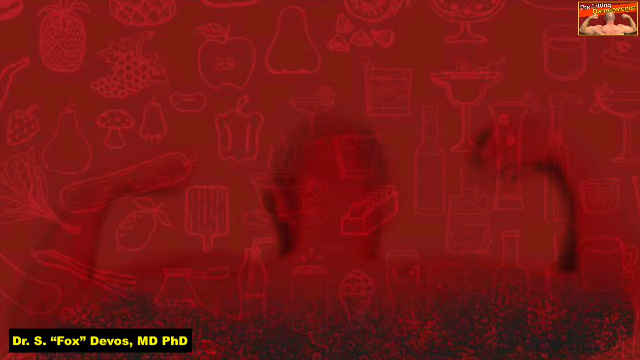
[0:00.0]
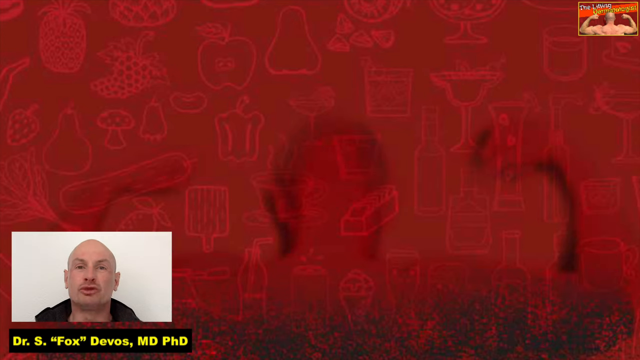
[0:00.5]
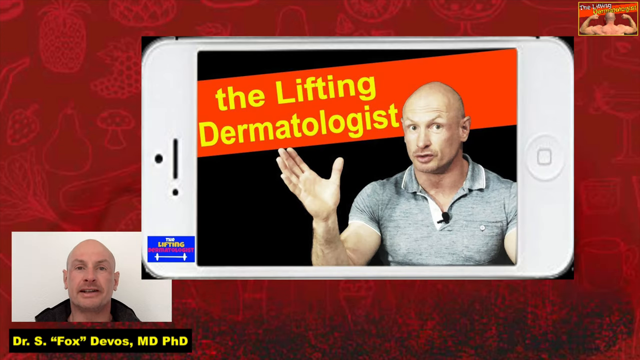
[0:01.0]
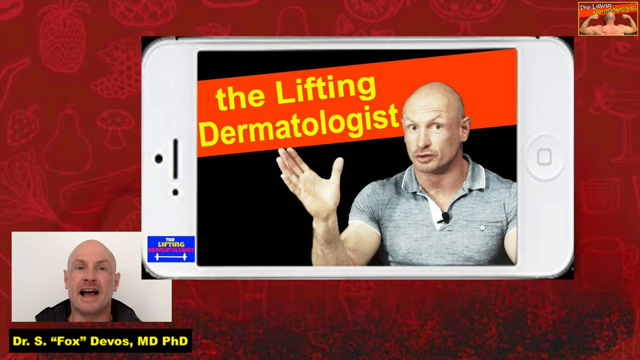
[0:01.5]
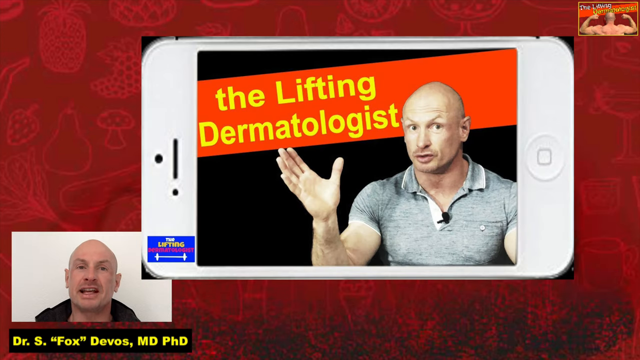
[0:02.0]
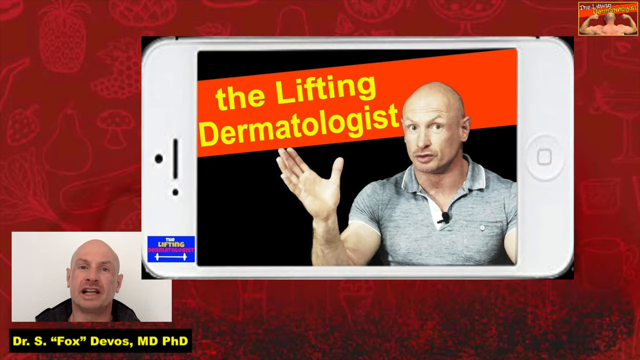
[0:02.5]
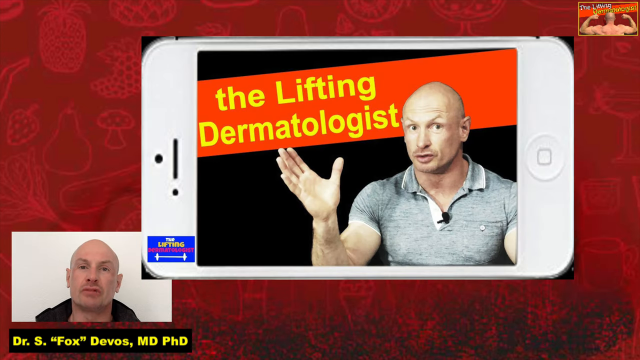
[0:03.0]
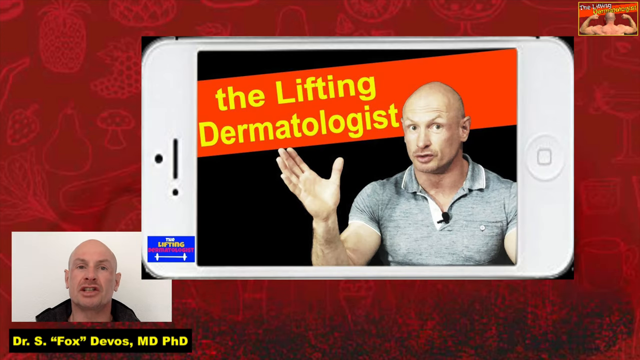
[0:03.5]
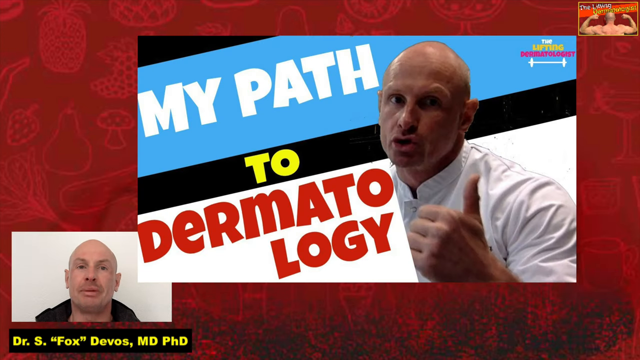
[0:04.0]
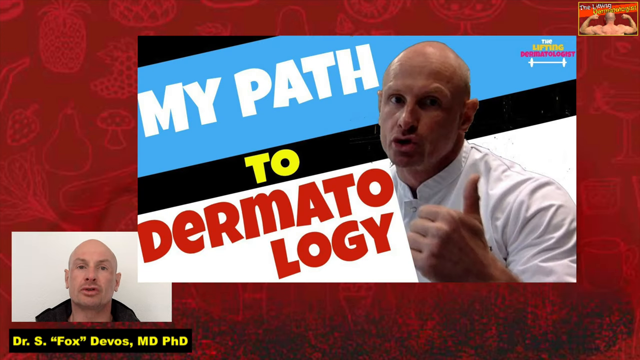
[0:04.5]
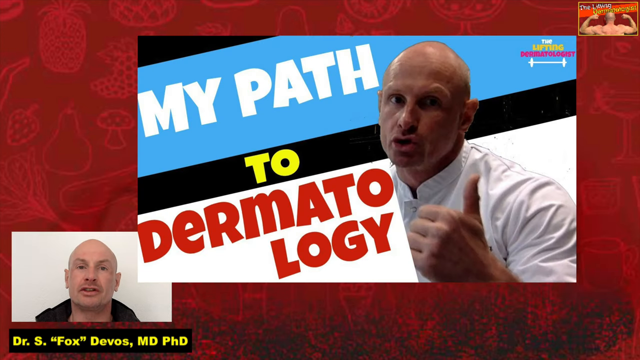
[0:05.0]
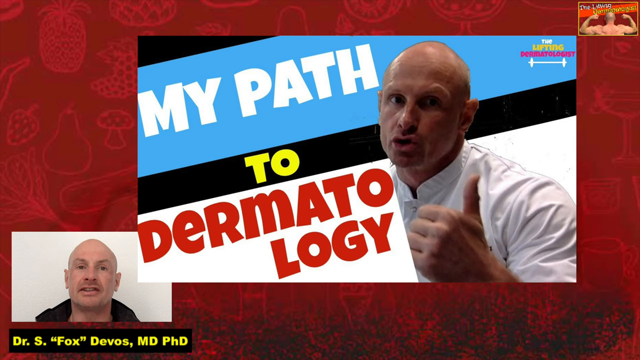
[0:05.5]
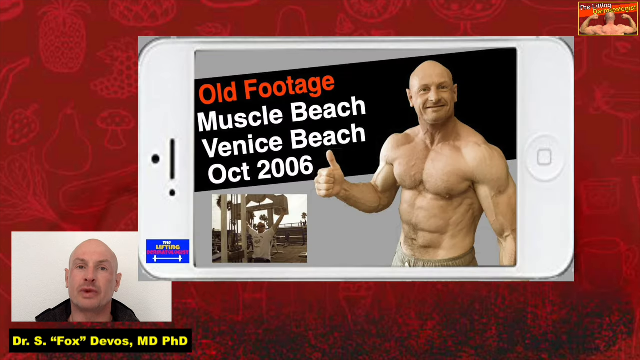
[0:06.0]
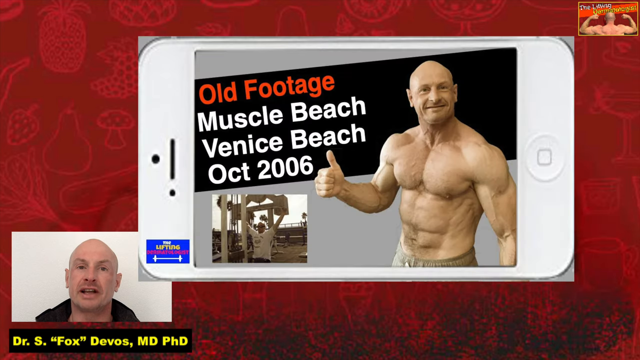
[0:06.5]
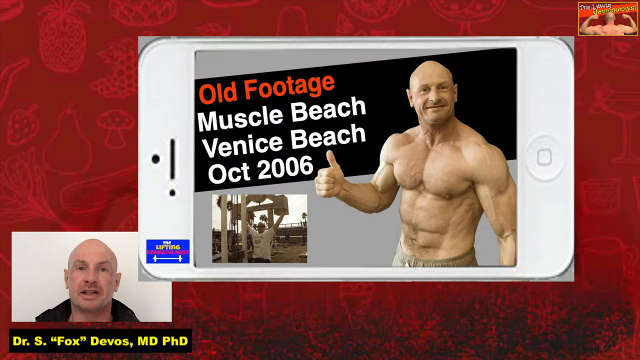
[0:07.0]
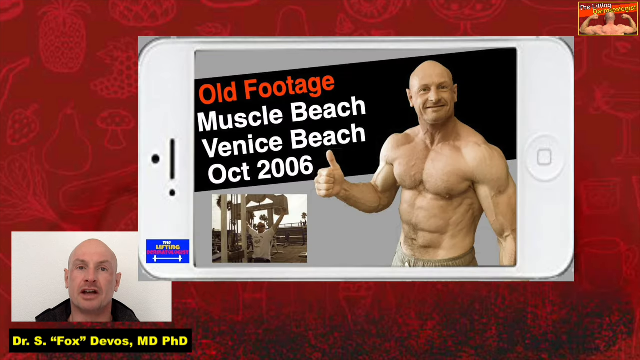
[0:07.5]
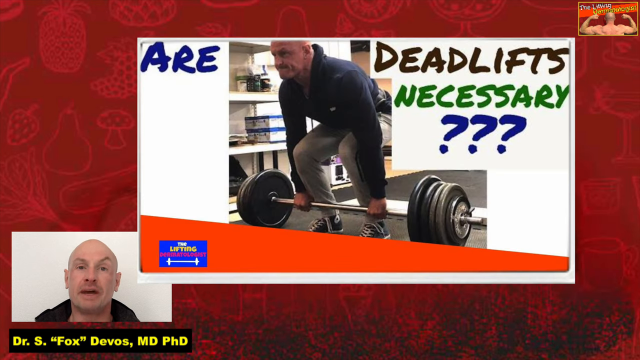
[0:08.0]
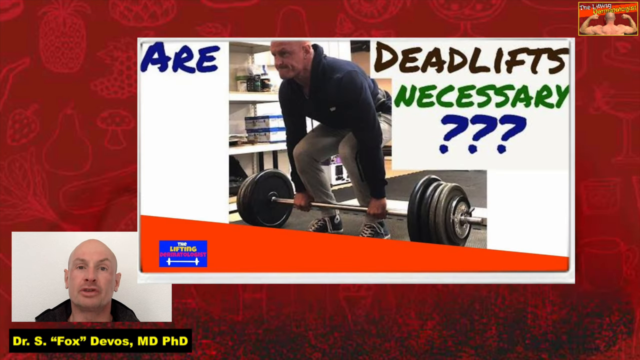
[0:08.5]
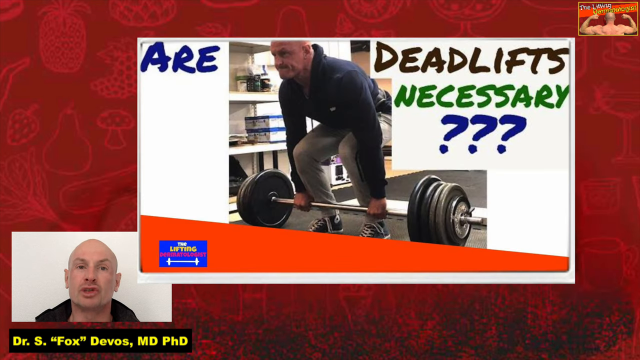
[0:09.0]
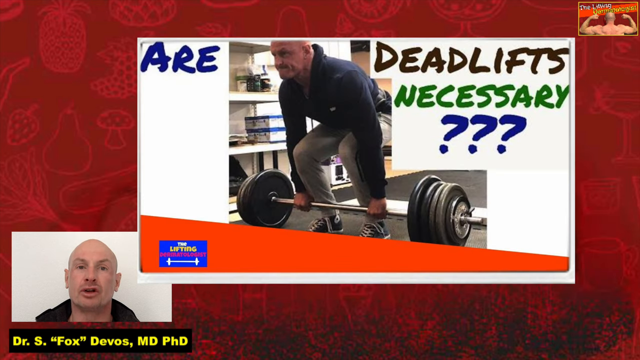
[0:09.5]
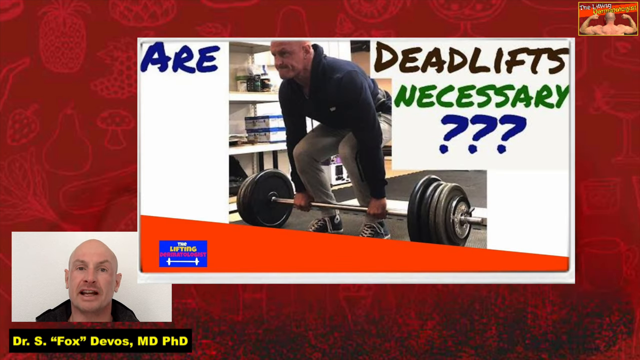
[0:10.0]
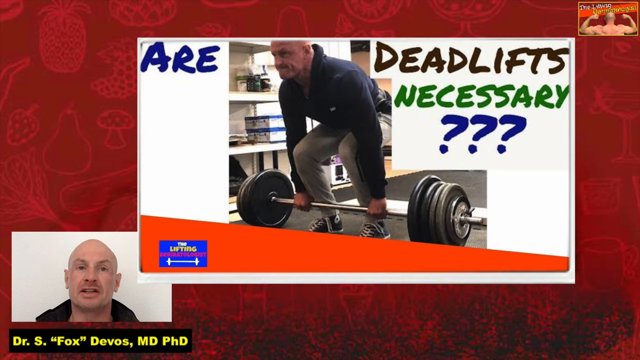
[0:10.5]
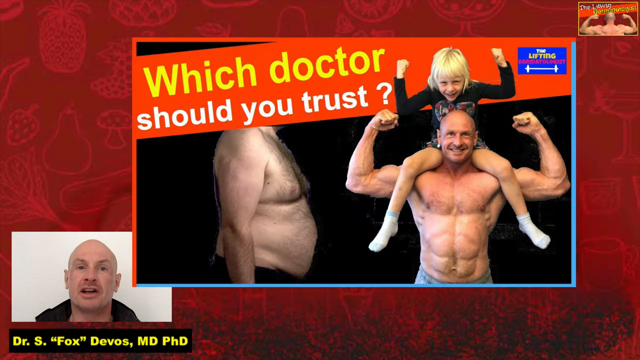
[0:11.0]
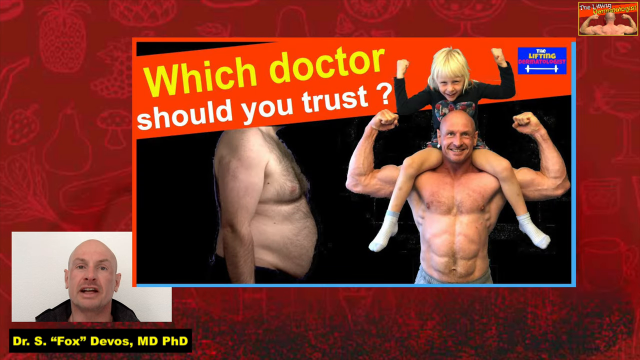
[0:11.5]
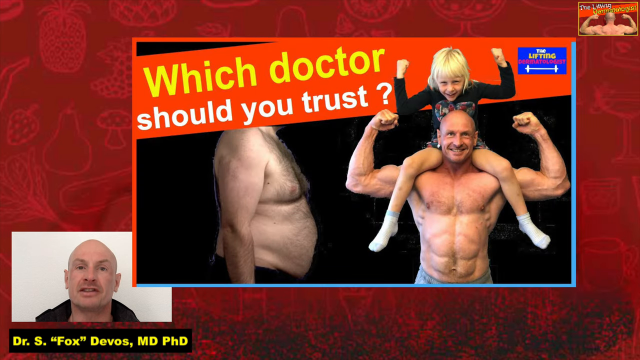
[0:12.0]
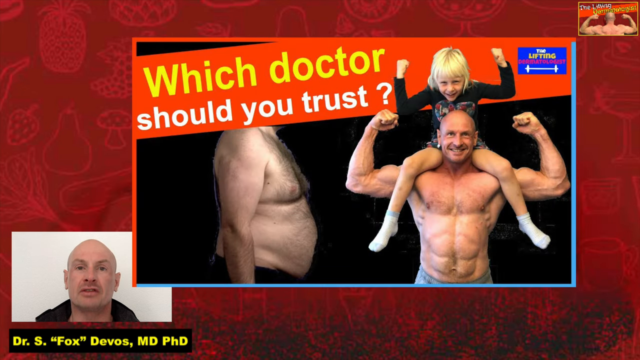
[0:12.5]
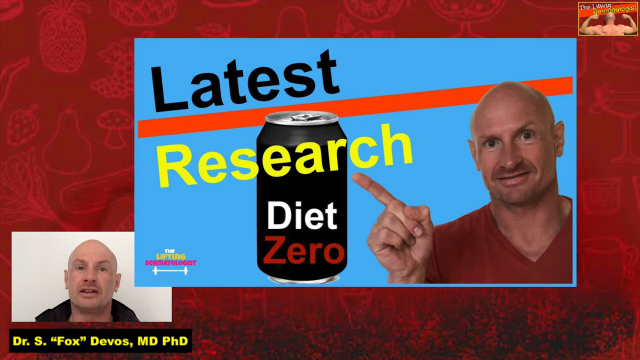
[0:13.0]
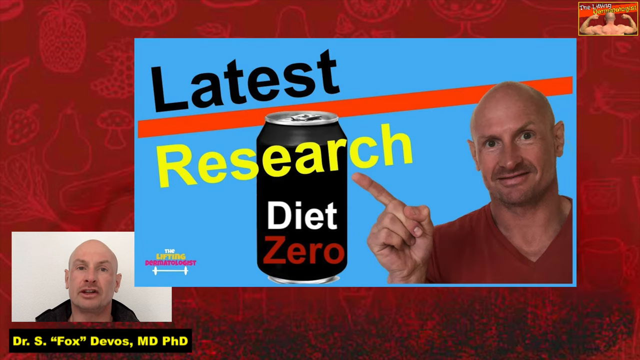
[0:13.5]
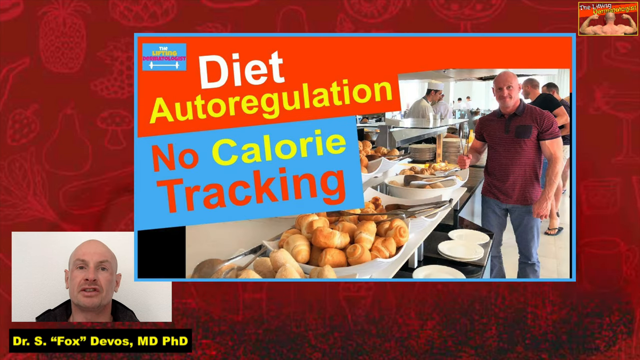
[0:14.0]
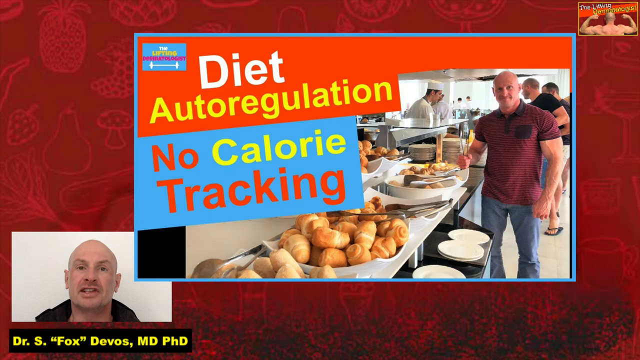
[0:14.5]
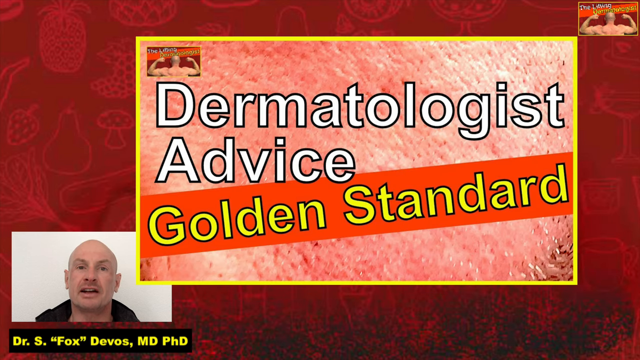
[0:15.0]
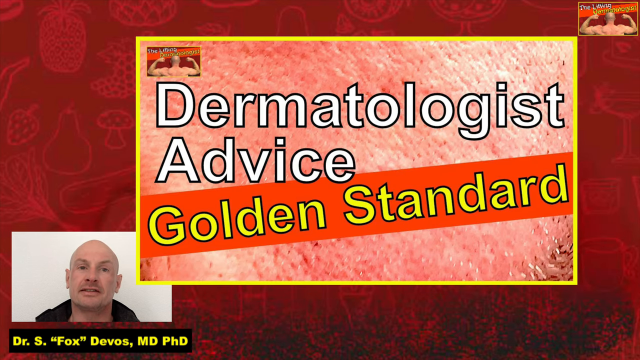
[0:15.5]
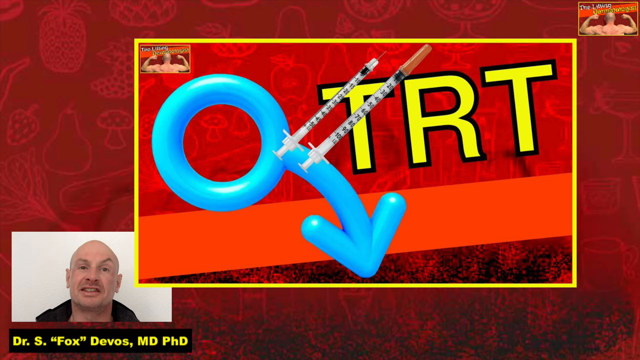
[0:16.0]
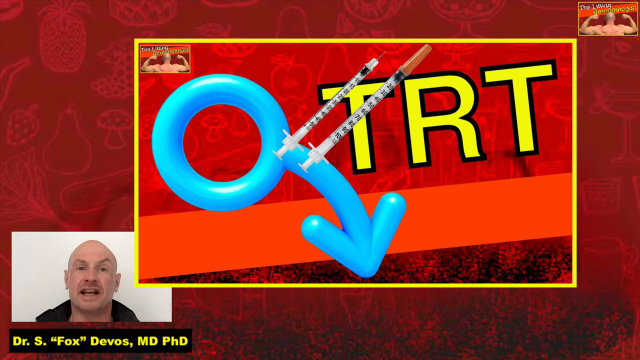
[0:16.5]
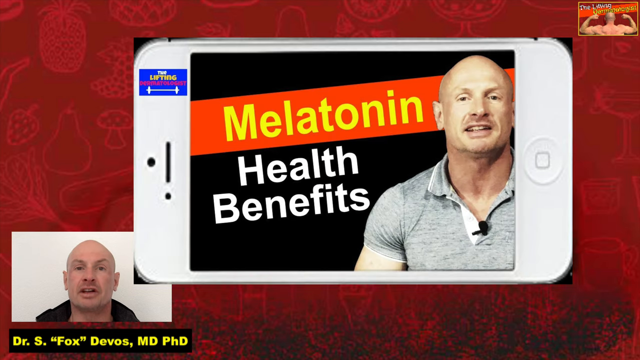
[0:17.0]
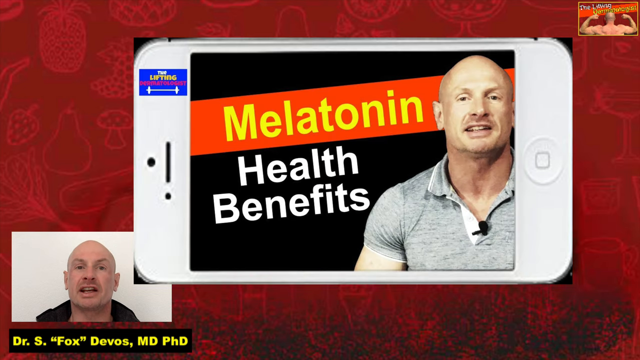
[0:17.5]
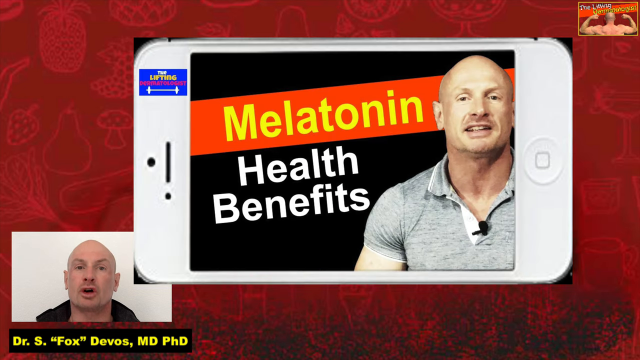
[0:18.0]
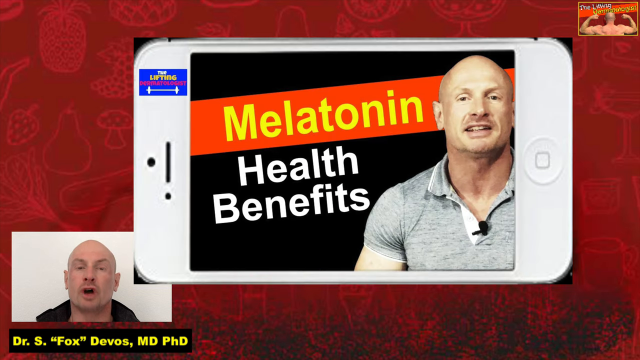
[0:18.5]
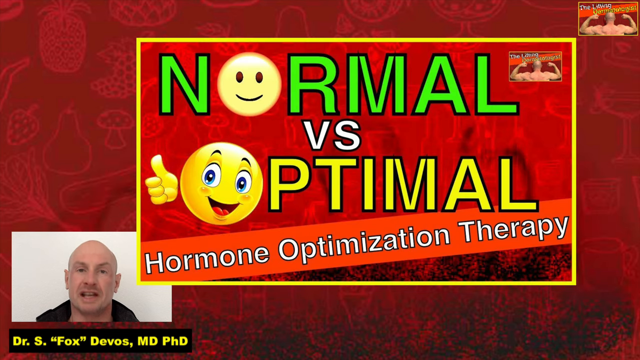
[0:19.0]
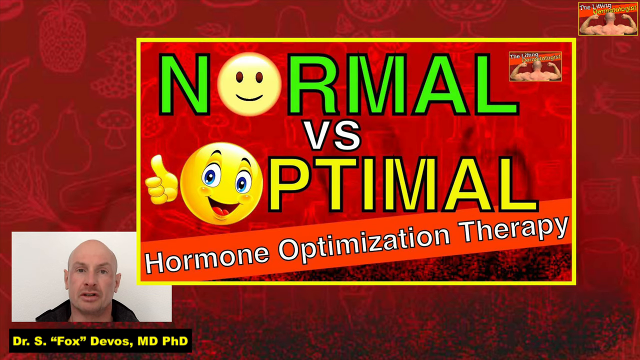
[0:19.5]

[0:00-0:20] The screen is filled with red, and on this background there are many shapes that look like fruits and vegetables drawn with a sort of pink outline. There is also what looks like the shadow of a man with the back of his head to the viewer, his two hands lifted up as he makes what looks like a kind of muscle-flexing gesture; his wrists curve over and his hands are held up, possibly bent at the elbows. A man appears in a box on the left-hand side of the screen. In the centre of the screen is a mobile phone turned on its side so it is horizontal, and what looks like the same man appears on it, wearing a grey polo neck T-shirt. His head is turned slightly to the right so his right ear cannot be seen. His right hand is bent at the elbow and held up, with his fingers and thumb straight, the four fingers held together and the thumb apart. The text on the phone image reads "A lifting dermatologist". In the bottom left of the screen, only the man's head and shoulders are visible; he looks like he is wearing a black jacket, and he talks. The video cuts to an image of the man again, his head tilted left with his left ear visible and his right ear not, and the text reads "My path to dermatology". The man holds his thumb up to the screen, the thumb erect and the fingers clenched together in a fist. Another image follows of what looks like the same man, this time with no shirt on and lots of muscles, his right arm held up and bent at the elbow, his fingers clenched in a fist and his thumb erect in a thumbs-up. Another image appears with the text "Are deadlifts necessary?" The man squats down with knees bent and arms straight down, the fingers and thumbs of both hands grabbing a silver pole as he lifts weights. The video cuts to two images side by side: on the left is a side view of a man with quite a fat belly; on the right is a man shown from the waist up, holding both hands to the sides of his body with his arms bent at the elbows and his clenched fists level with the top of his head. On his shoulders sits what looks like a young girl in a black top, making the same pose with her arms aloft, bent in at the elbows, fists clenched level with her head. Next is an image of a man with a can of drink next to his head and text beginning "Latest research". He holds his right fist up, the index finger out and erect, the other three fingers curled in and the thumb on top of the middle finger, pointing at the can. The video cuts to the man at a deli, and text appears on the screen: "Dermatologist advised. Golden standard." Next comes an animated image of two syringes with the text "TRT" in yellow. On-screen text then says "melatonin health benefits" while a man looks forward. Text on the screen then says "normal versus optimal hormone optimization therapy".